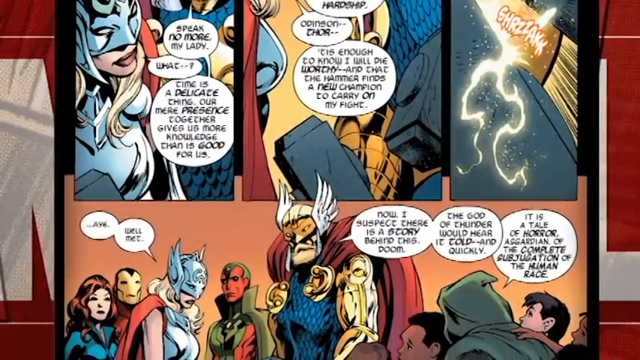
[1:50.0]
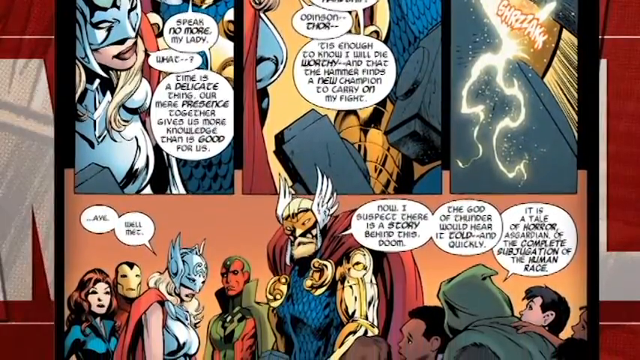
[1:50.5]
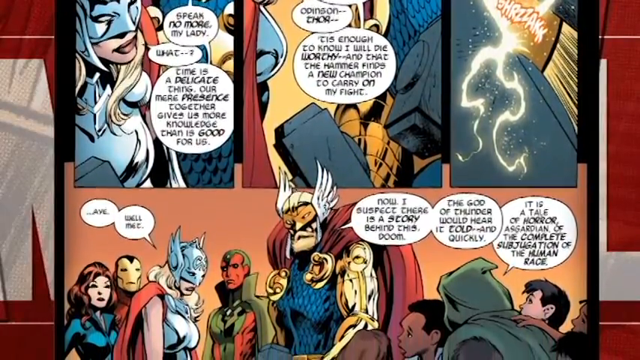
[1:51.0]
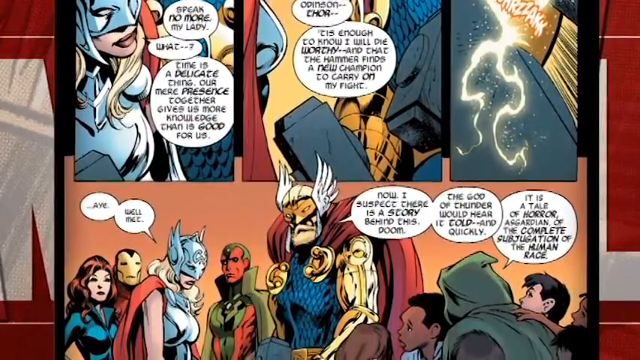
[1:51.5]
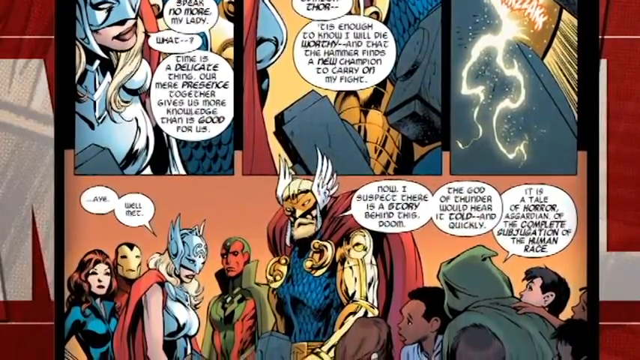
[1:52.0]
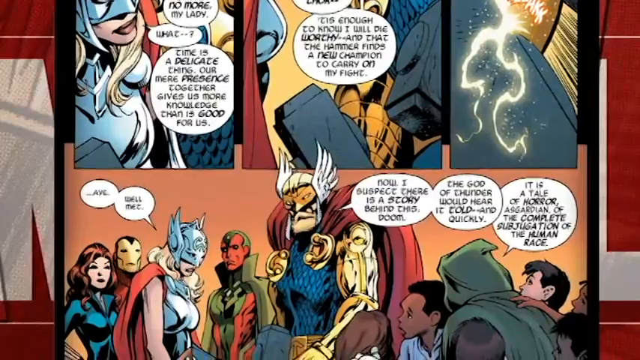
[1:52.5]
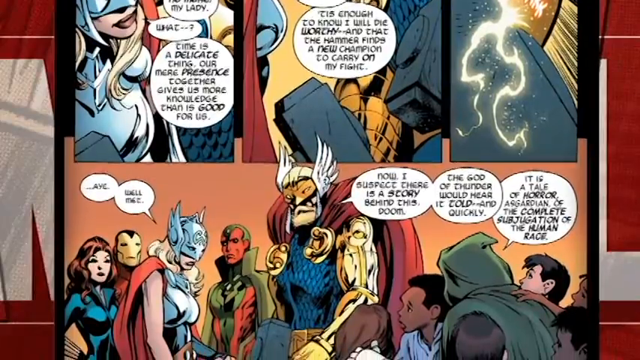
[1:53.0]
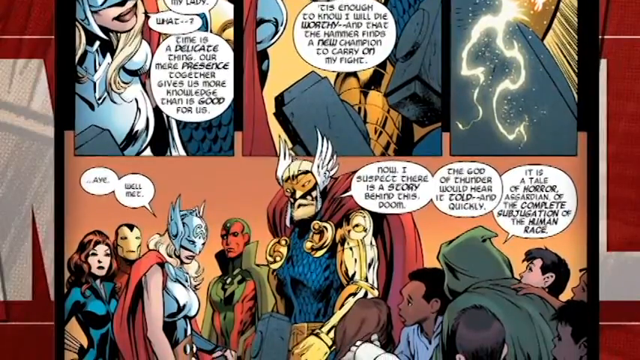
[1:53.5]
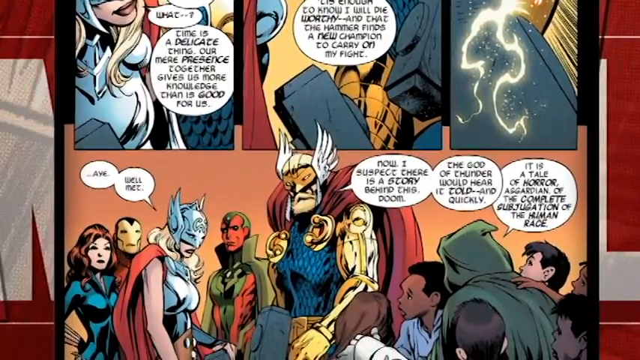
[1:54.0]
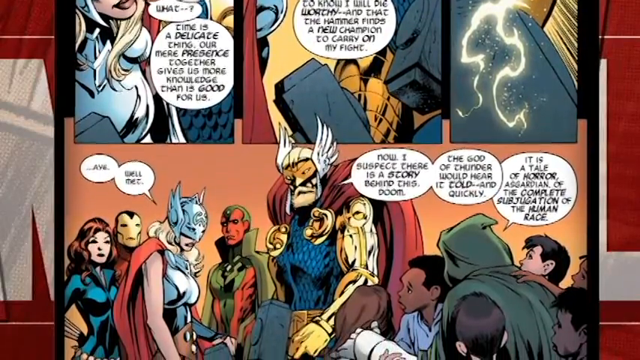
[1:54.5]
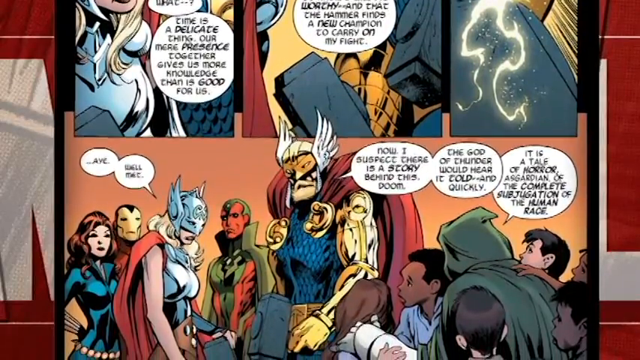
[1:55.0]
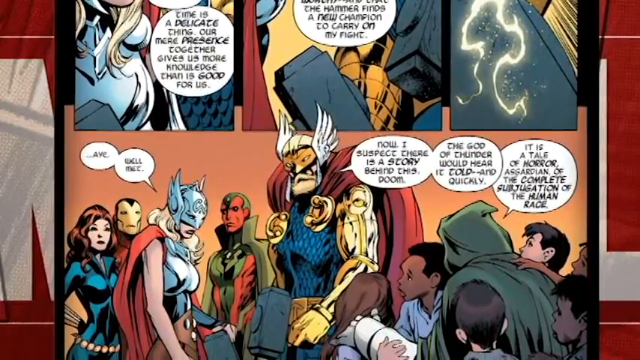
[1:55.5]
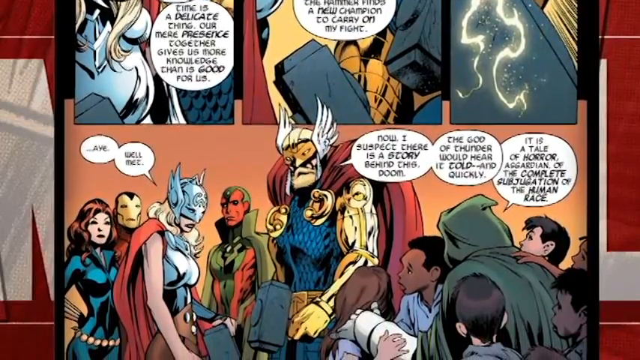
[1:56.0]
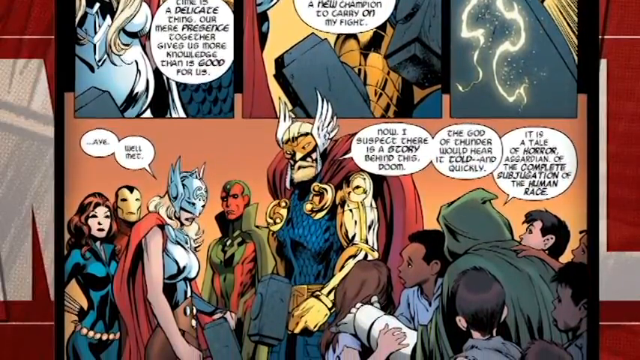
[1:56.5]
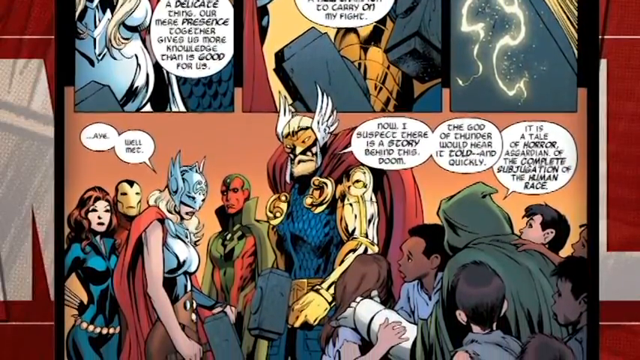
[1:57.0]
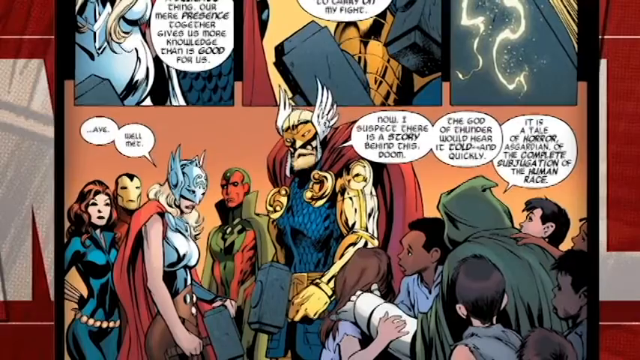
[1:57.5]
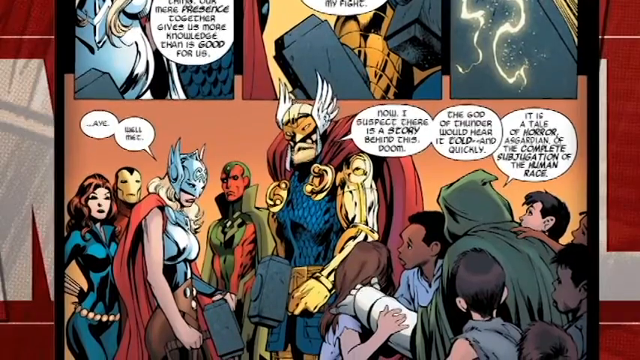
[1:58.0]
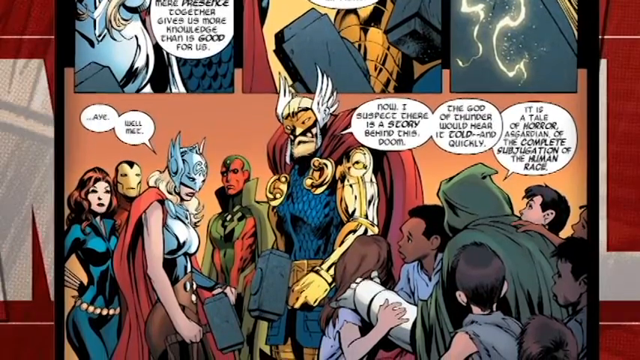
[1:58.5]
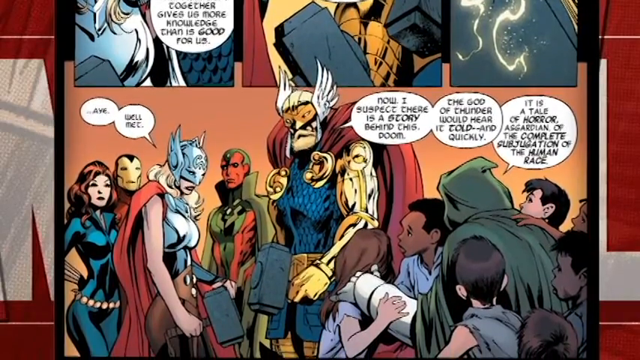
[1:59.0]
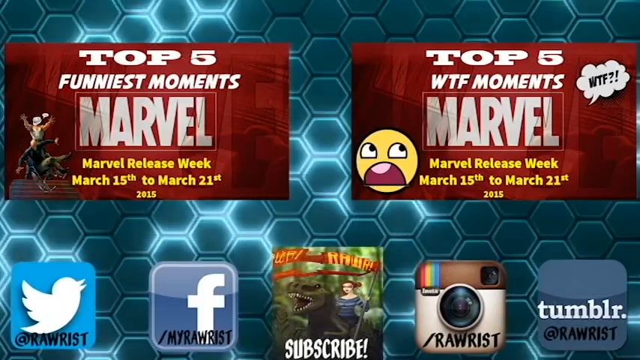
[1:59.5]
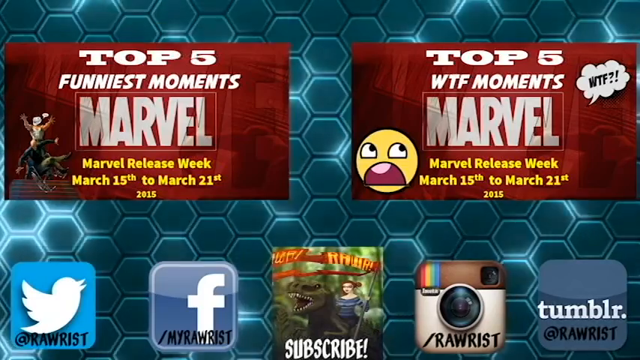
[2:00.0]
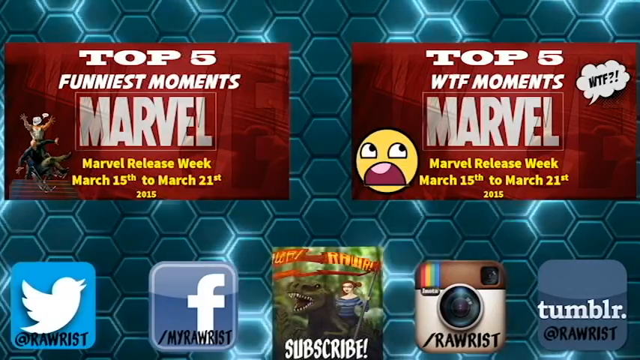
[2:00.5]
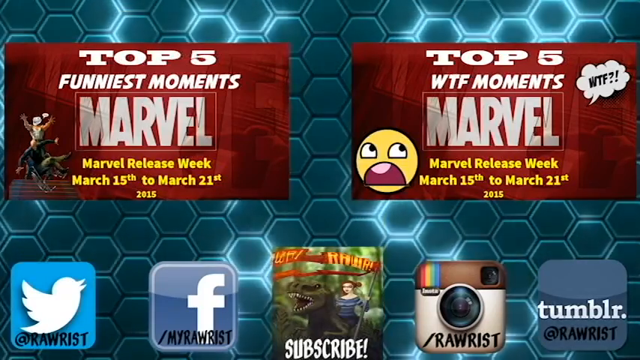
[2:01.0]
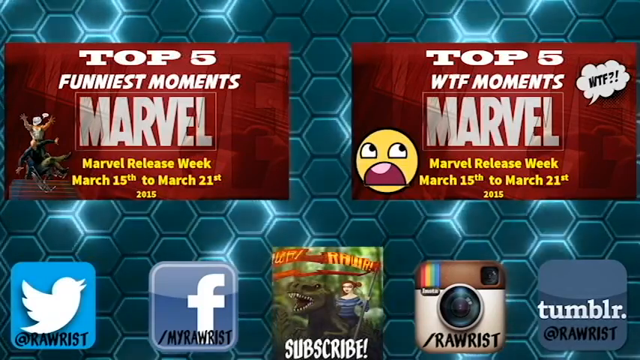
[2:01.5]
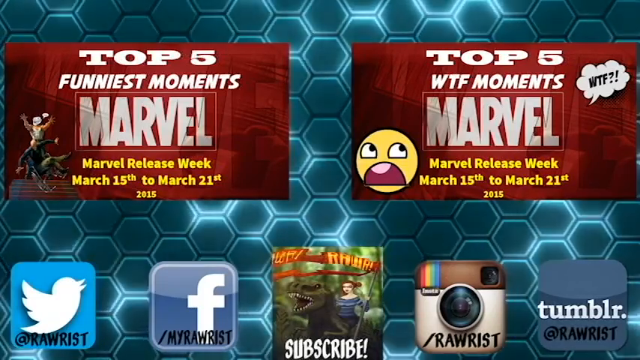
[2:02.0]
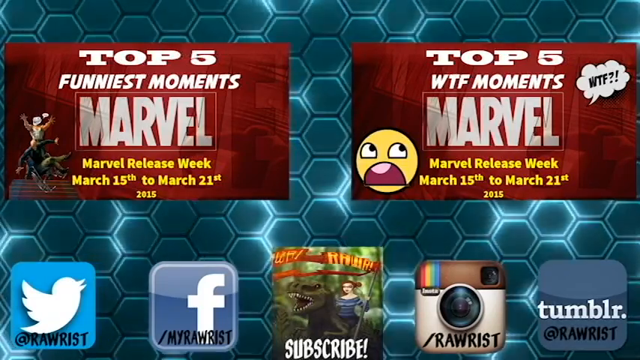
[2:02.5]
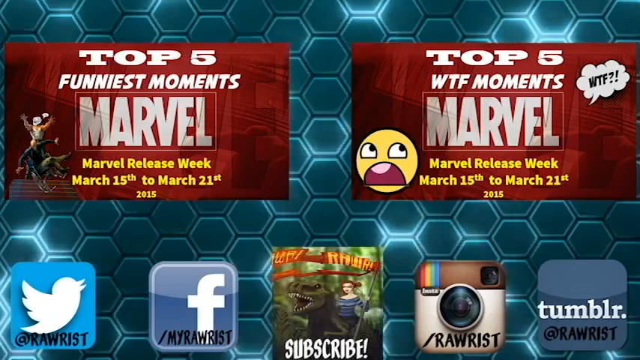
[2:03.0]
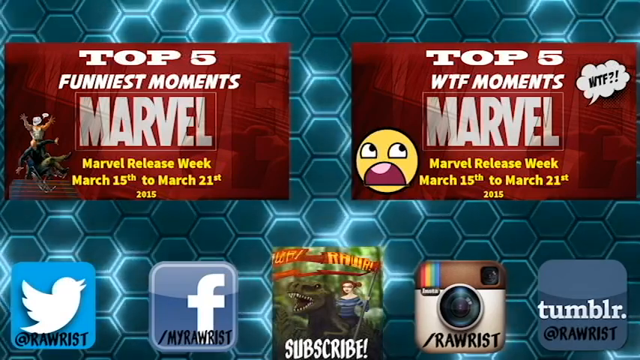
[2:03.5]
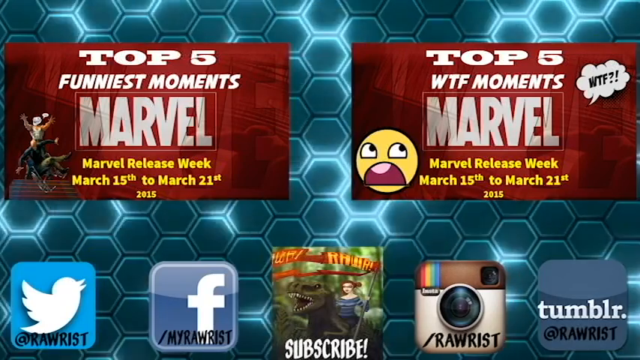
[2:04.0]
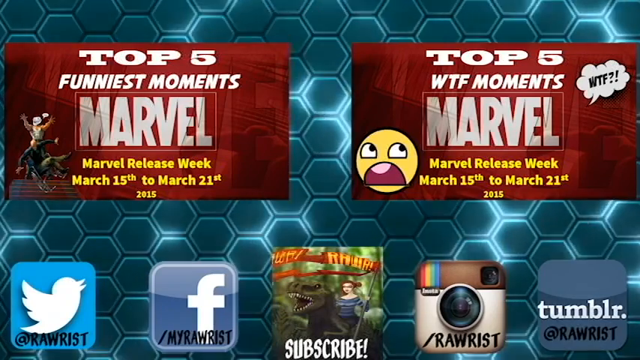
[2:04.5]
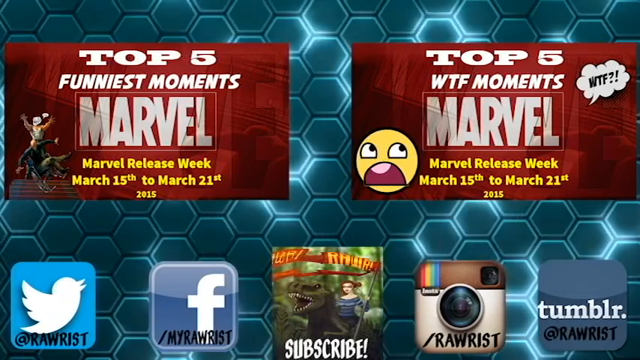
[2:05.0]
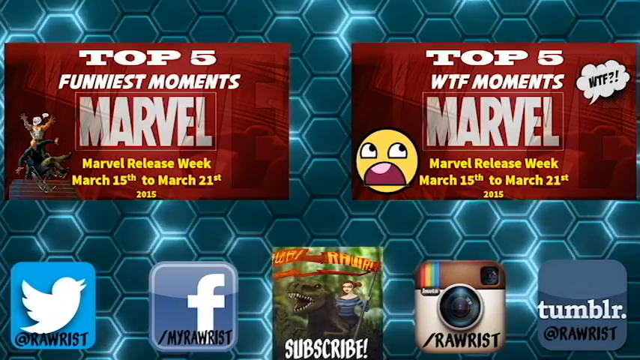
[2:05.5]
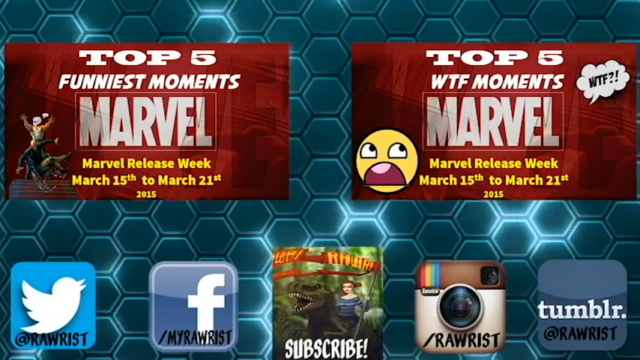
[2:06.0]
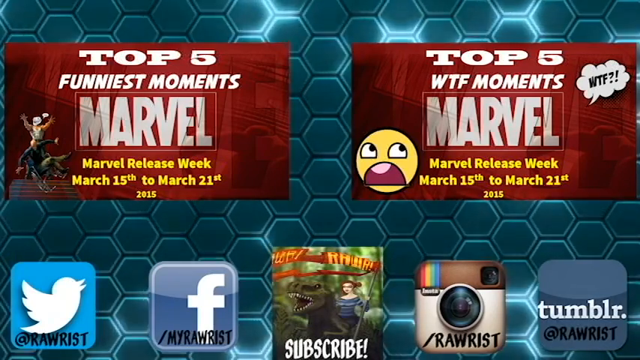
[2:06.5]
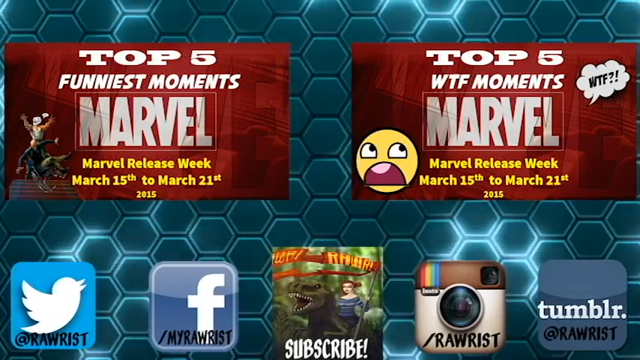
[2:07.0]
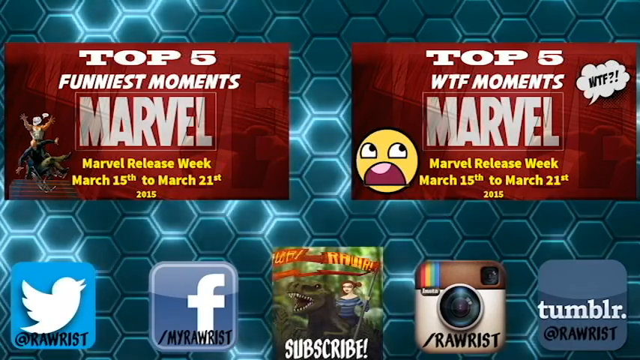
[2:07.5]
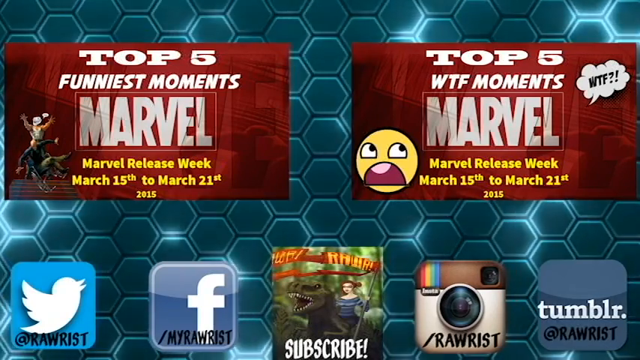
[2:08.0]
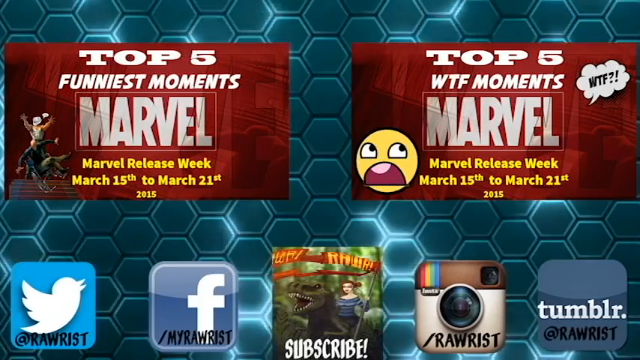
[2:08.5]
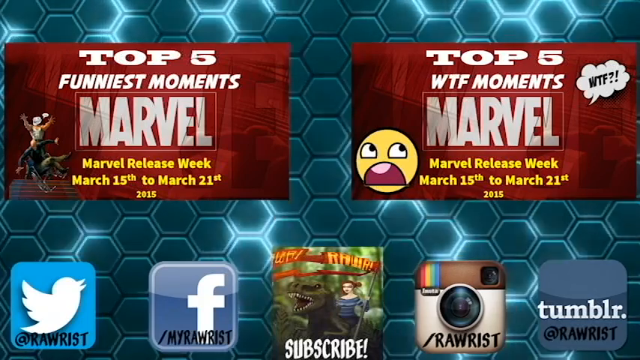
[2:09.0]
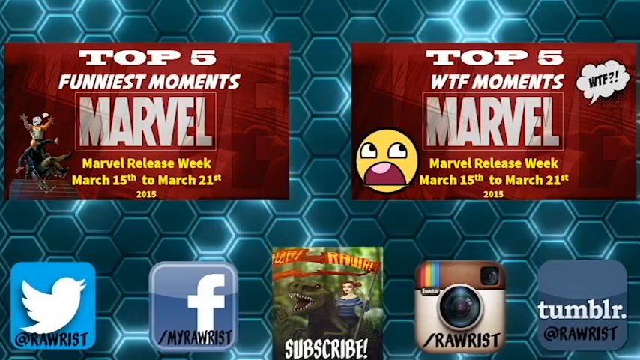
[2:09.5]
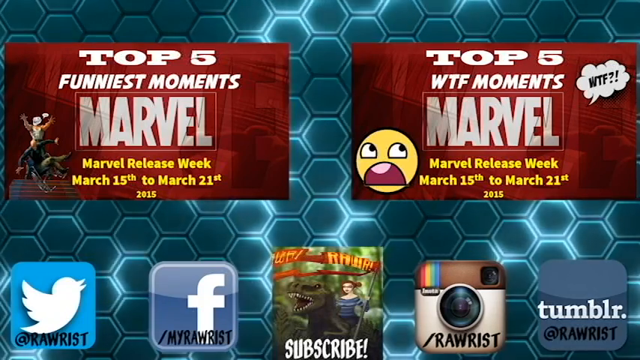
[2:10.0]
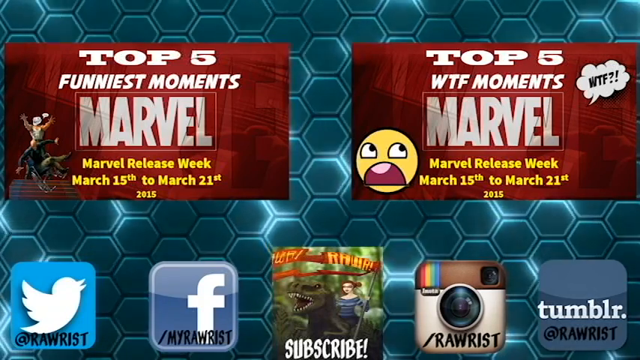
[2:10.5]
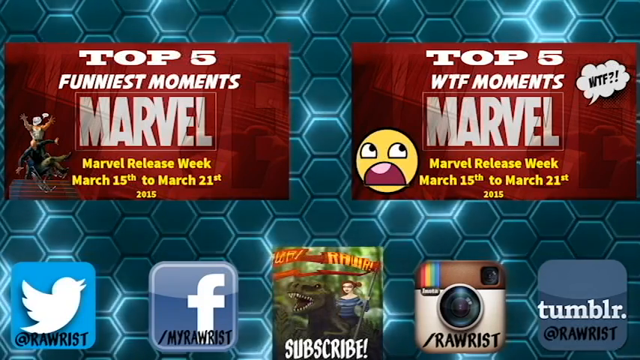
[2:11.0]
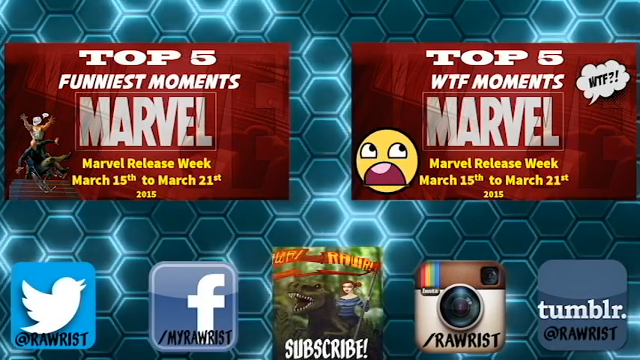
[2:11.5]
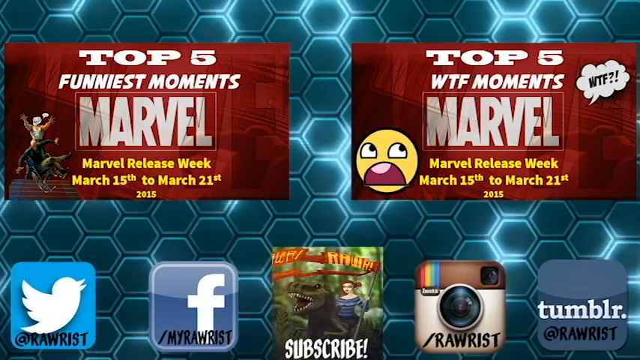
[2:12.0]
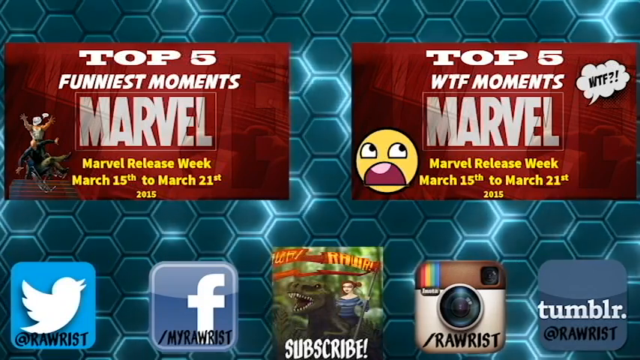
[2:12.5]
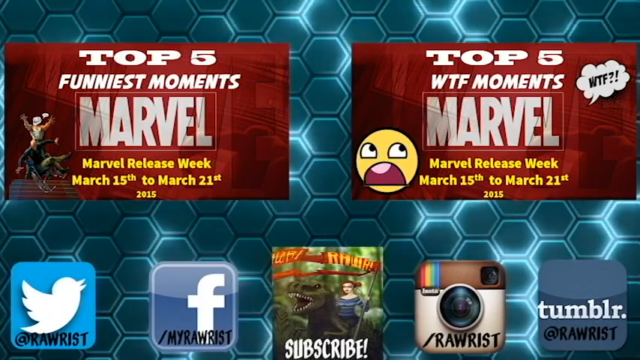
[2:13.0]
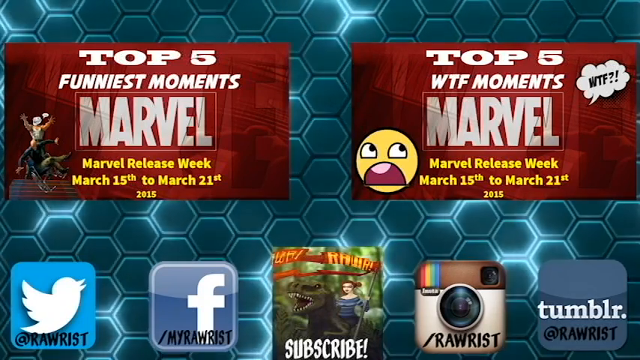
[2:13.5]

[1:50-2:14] The last portion of the large panel shows various people talking to each other. In the middle, at the center of the conversation, is the man with a large blonde beard, who seems to be wearing a helmet with wings and a large red cape. Toward the end, a large blue honeycomb structure in the background pulsates in different blue lights, and two other videos are offered to choose from: on the left "top 5 funniest moments for Marvel" and on the right "top 5 what the fuck moments for Marvel." Along the lower edge of the screen are social media icons for following the creator of the video: Twitter, Facebook, Instagram and Tumblr, with an icon to subscribe to the channel in the middle. This screen stays for the rest of the video.